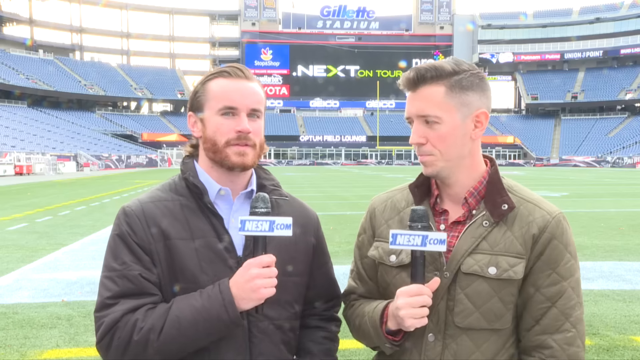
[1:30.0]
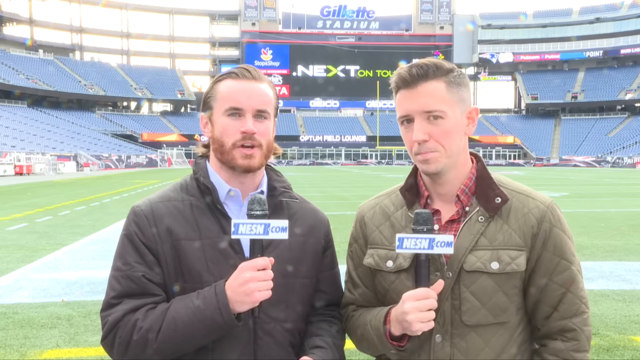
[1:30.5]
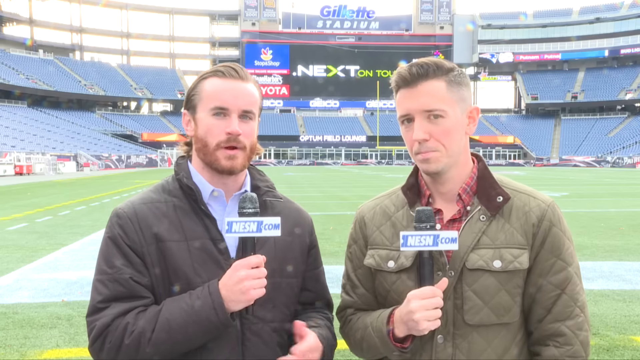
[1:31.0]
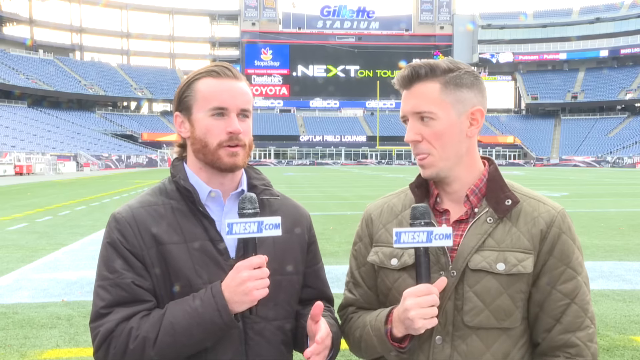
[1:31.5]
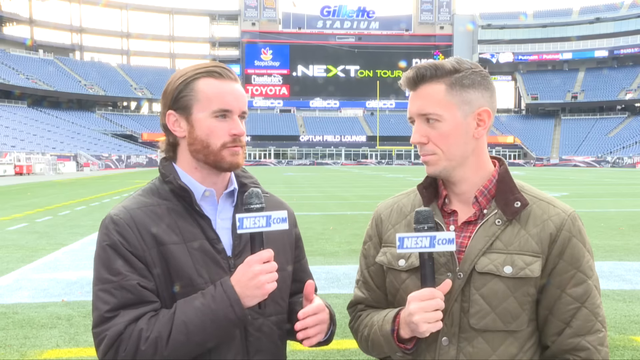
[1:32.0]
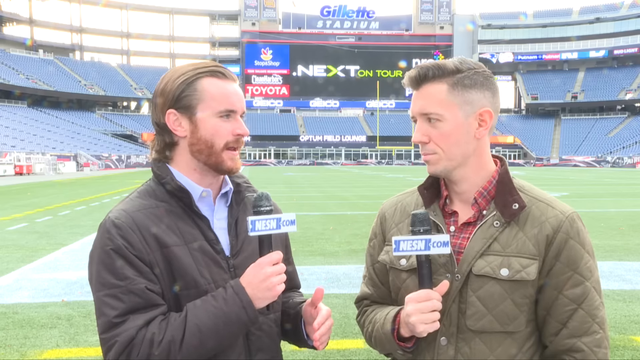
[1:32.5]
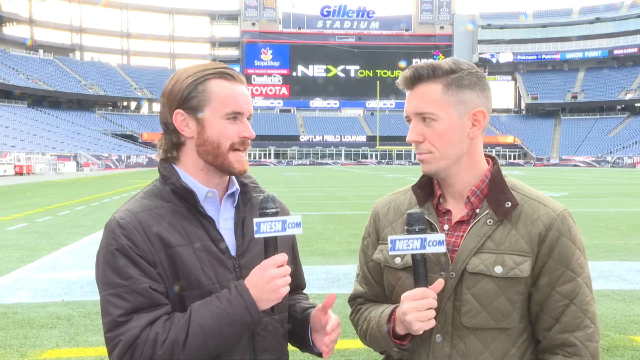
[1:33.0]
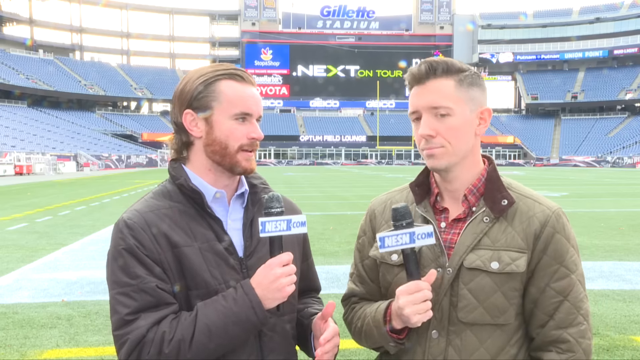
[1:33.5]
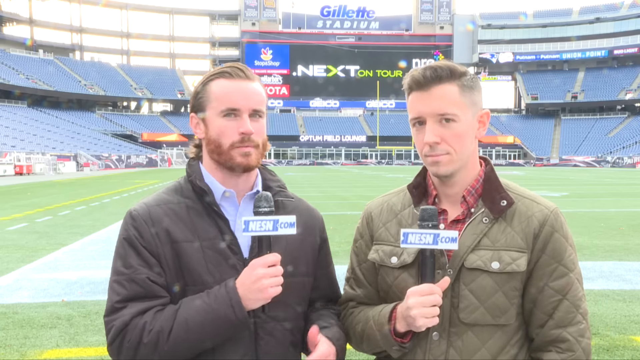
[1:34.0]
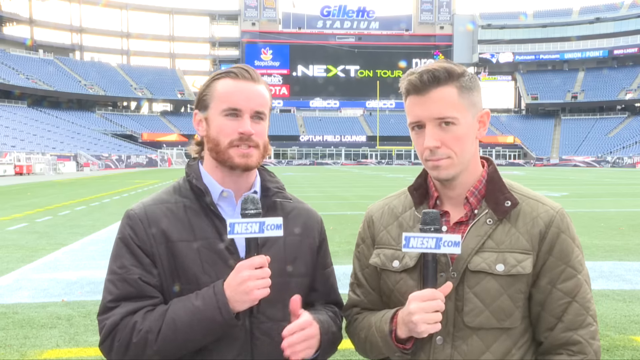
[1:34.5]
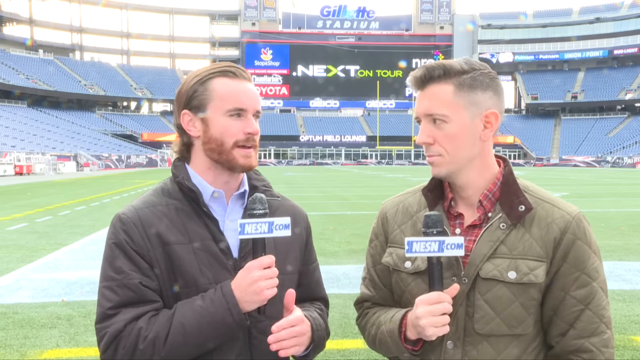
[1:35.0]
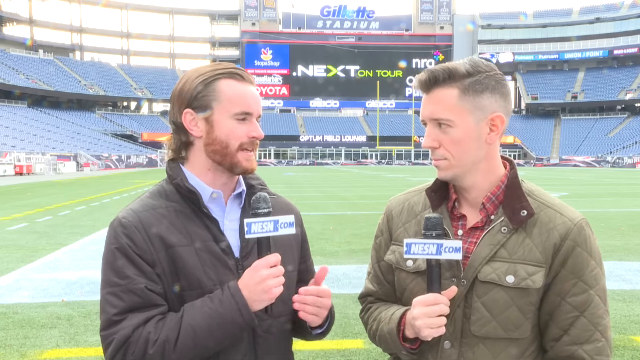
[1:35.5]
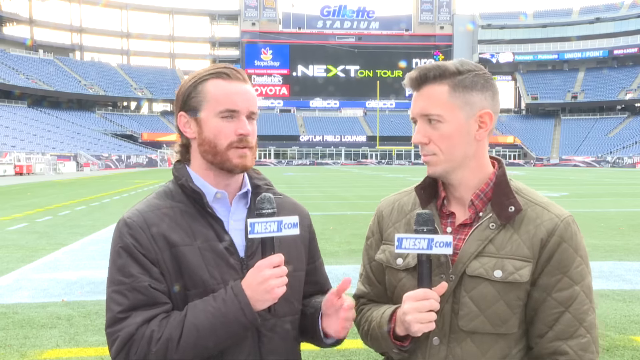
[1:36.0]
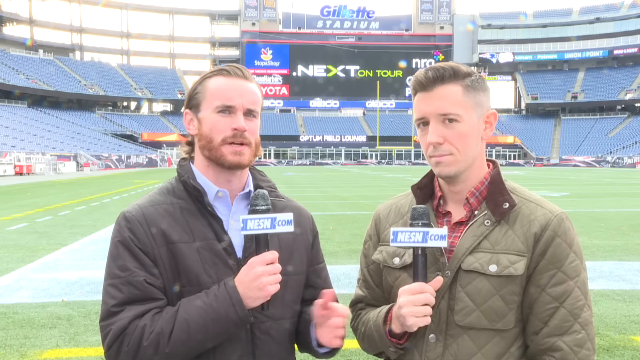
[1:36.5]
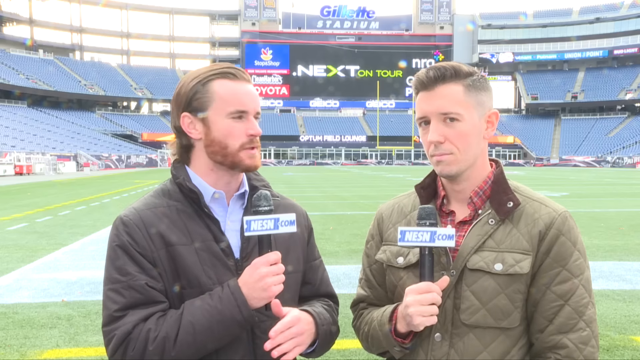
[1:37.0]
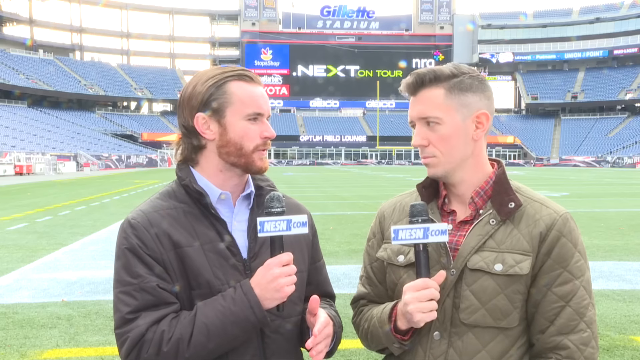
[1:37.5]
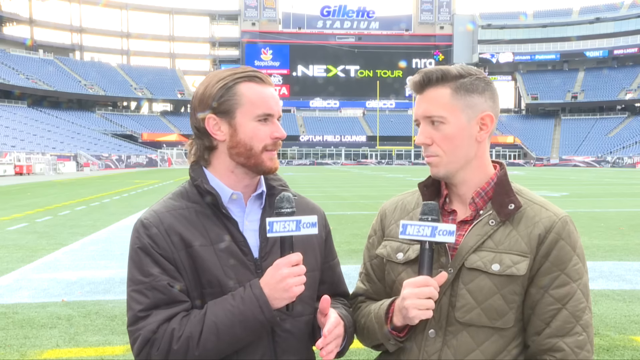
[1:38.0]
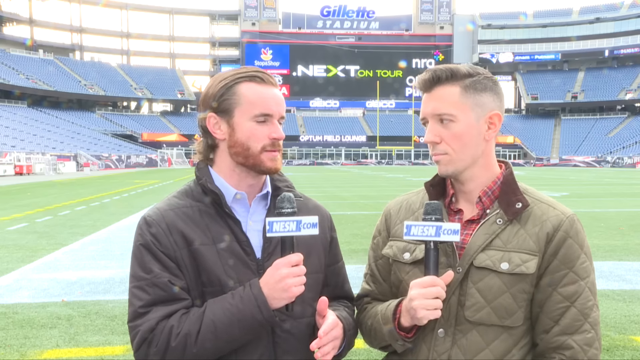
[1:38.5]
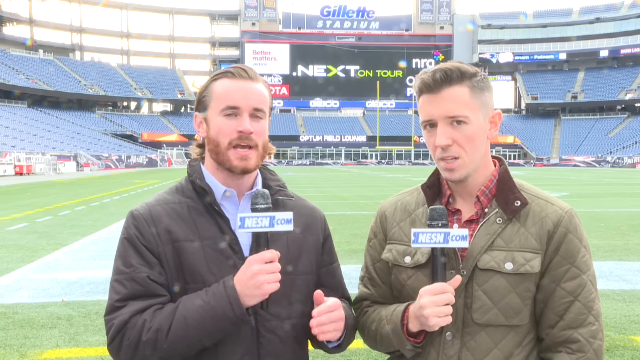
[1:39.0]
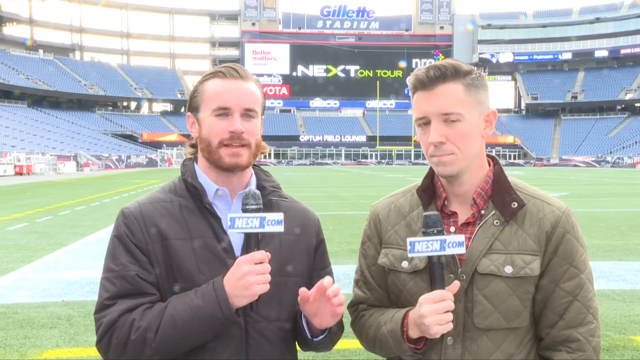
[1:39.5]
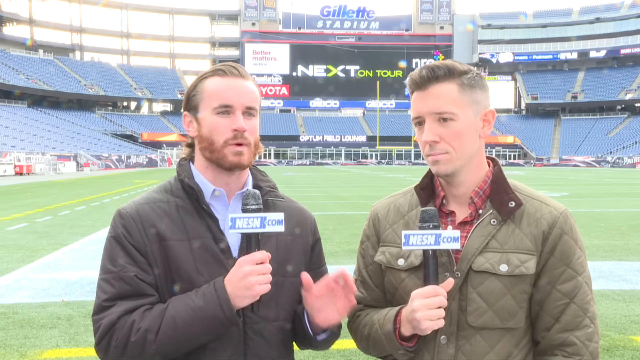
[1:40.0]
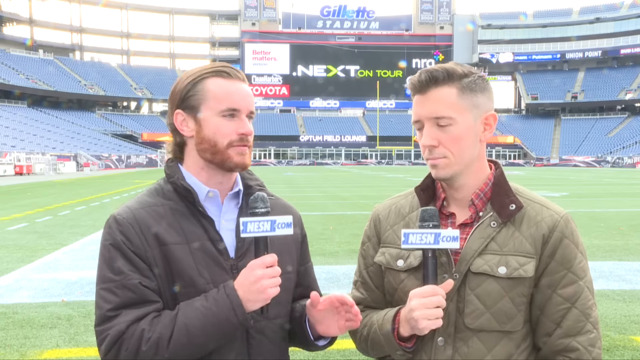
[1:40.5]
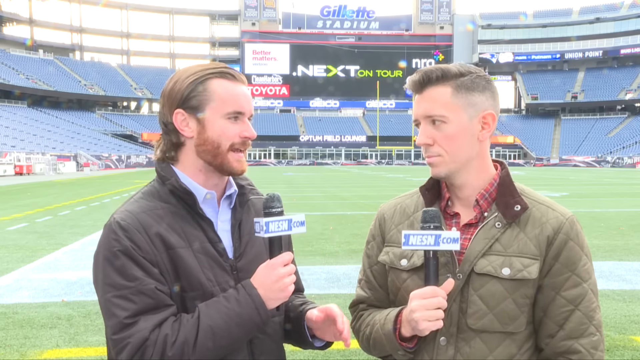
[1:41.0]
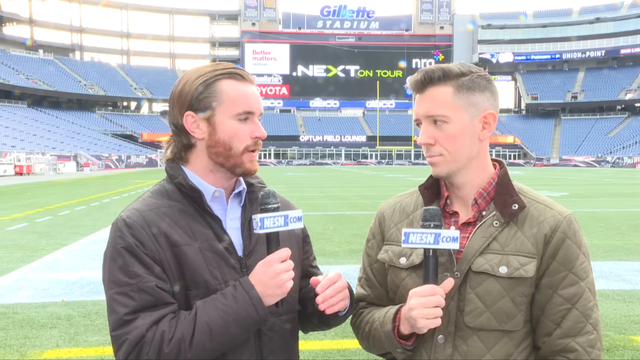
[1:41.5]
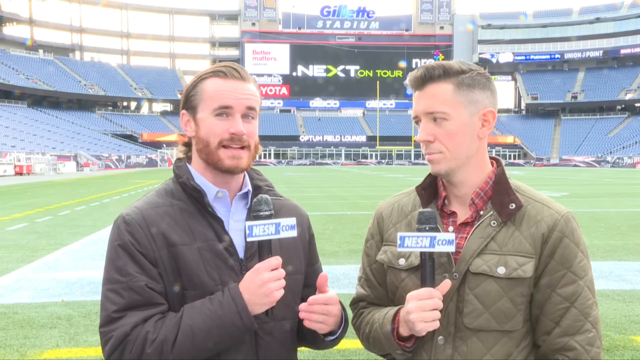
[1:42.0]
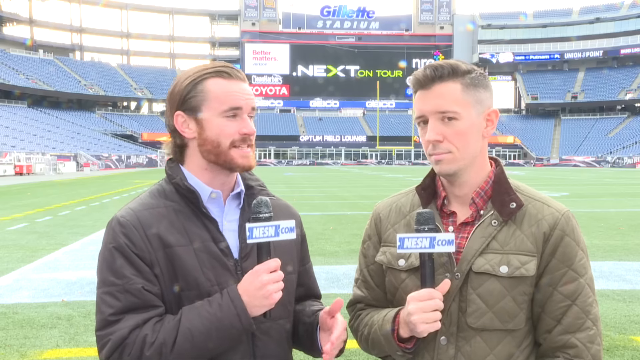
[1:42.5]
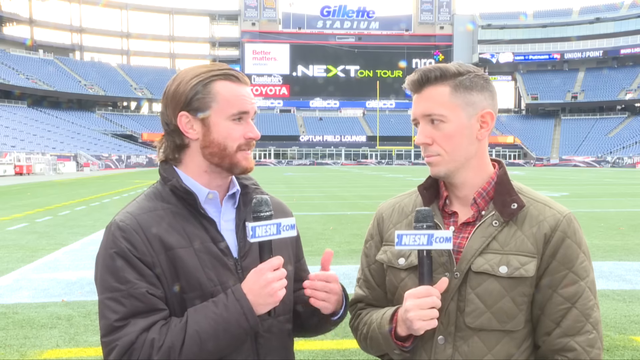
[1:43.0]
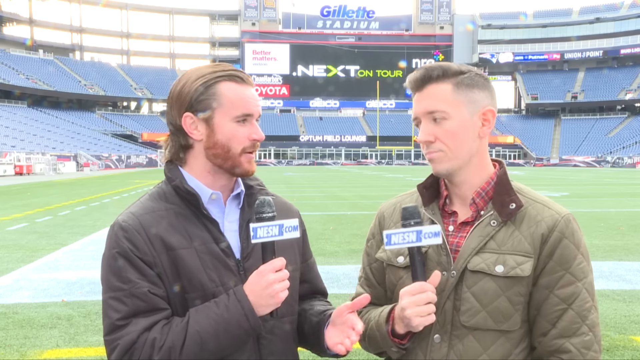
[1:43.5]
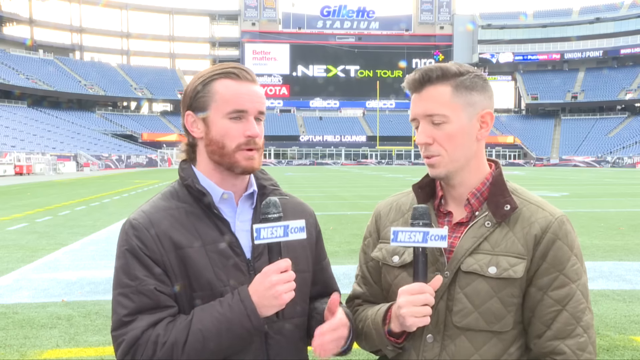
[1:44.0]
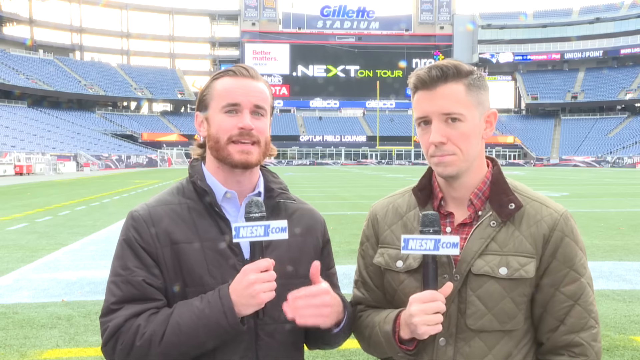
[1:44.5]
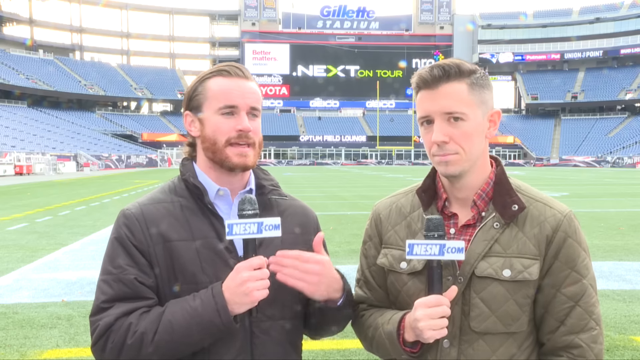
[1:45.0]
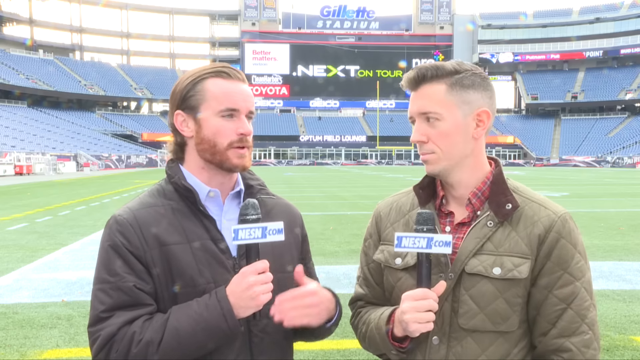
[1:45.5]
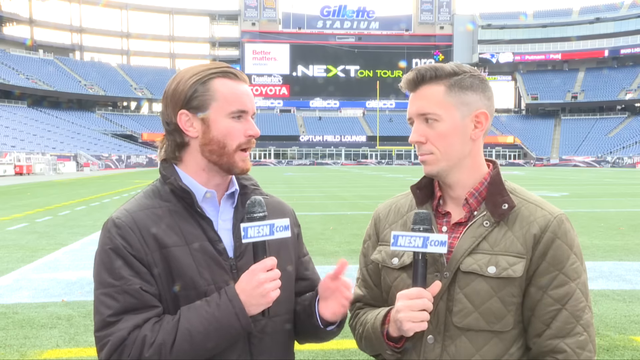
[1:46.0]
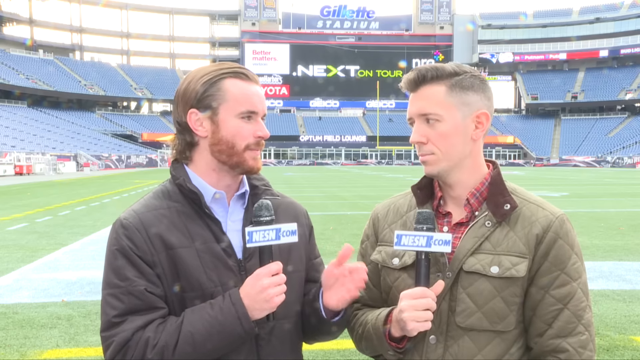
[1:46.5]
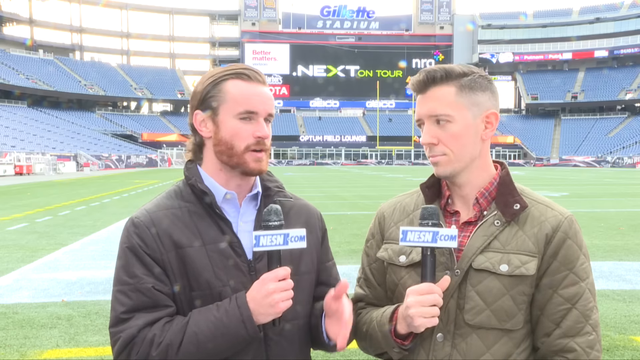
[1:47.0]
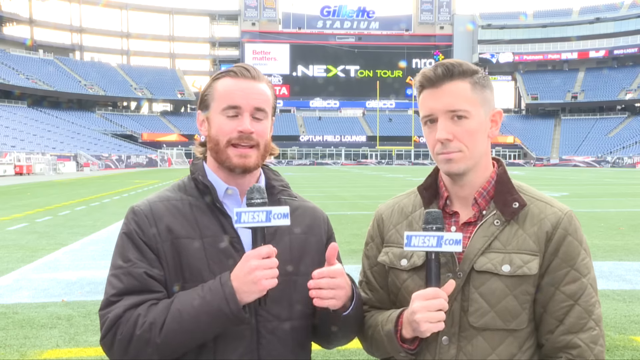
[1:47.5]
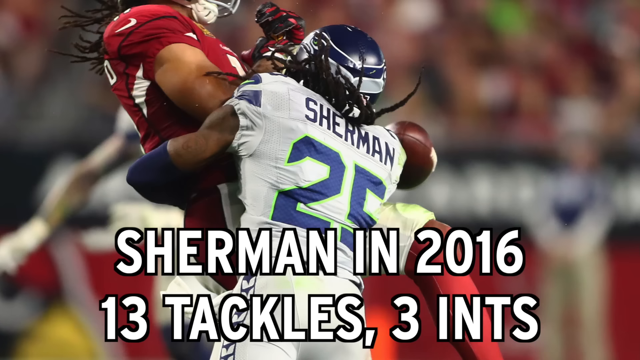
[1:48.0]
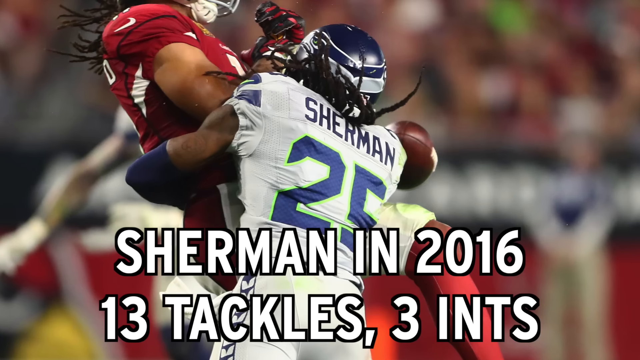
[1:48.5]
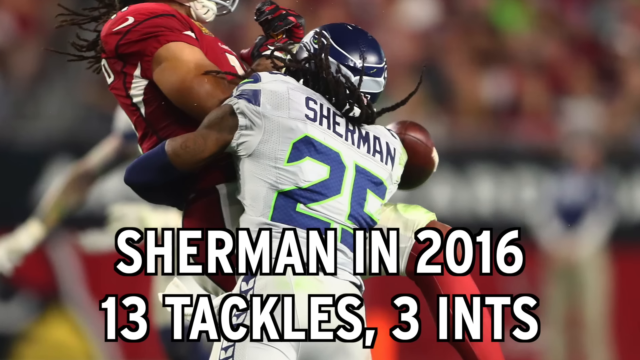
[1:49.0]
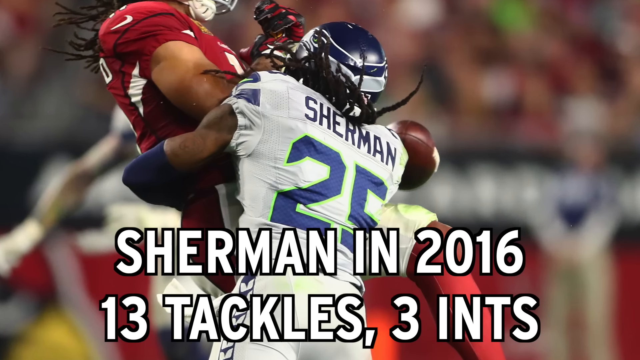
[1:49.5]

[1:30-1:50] At a football field, two sportscasters who work for NESN.com report, holding their microphones in their right hands, with a box reading "NESN.com" around each one. A quick clip shows a football player named Sherman playing in a game, then the video returns to the two men, who still report and increasingly turn to look at each other as they talk. Doug nods in agreement with Zach. A sign flashes: the Stop and Shop sign changes to something white with red lettering. Over on the right side, a narrow strip starts to change color, advertising something else, with something scrolling; it changes to a blue sign, becomes white, shows some text, then changes again.